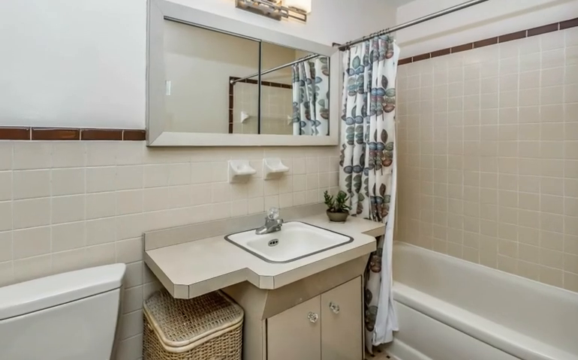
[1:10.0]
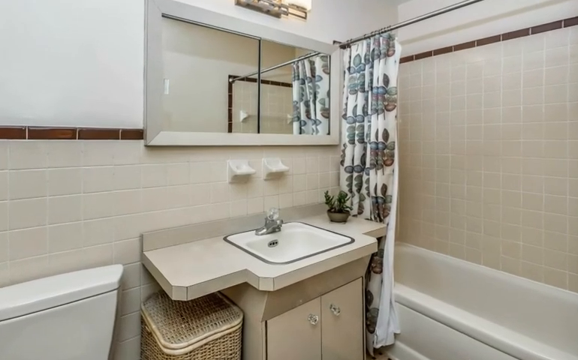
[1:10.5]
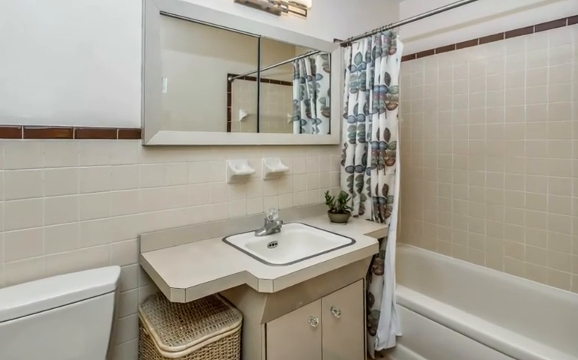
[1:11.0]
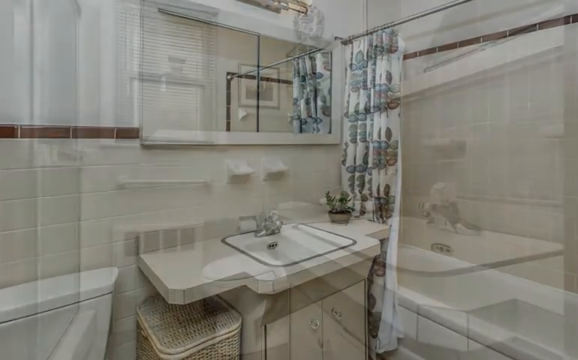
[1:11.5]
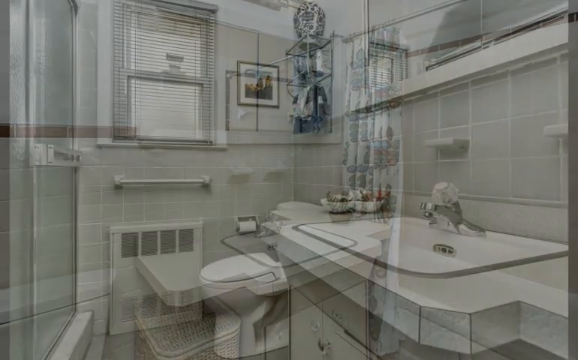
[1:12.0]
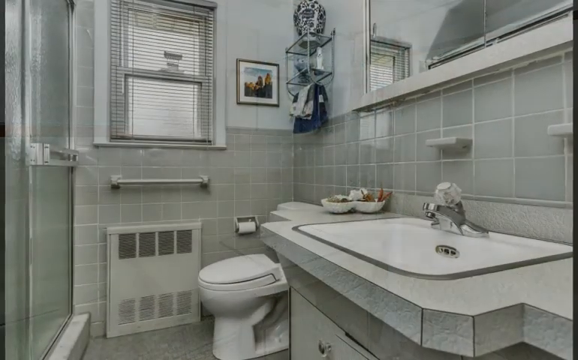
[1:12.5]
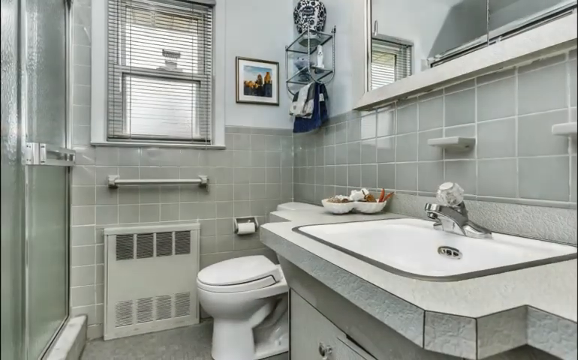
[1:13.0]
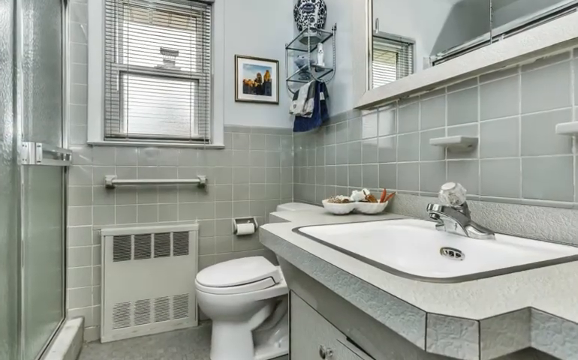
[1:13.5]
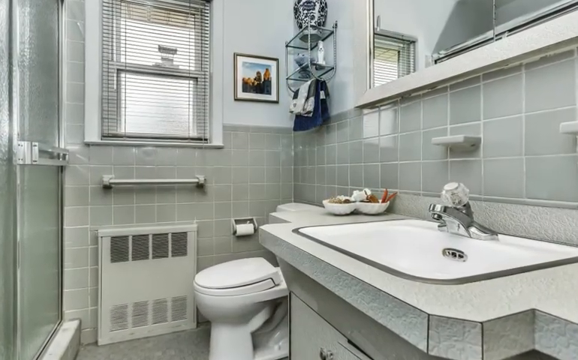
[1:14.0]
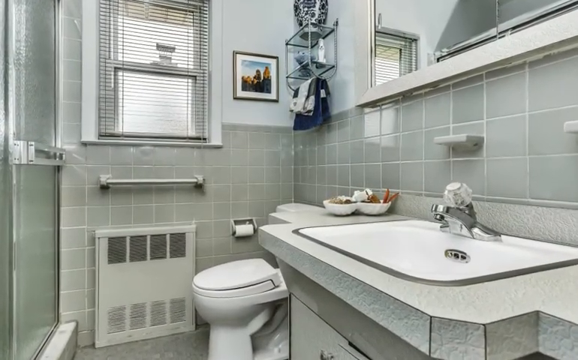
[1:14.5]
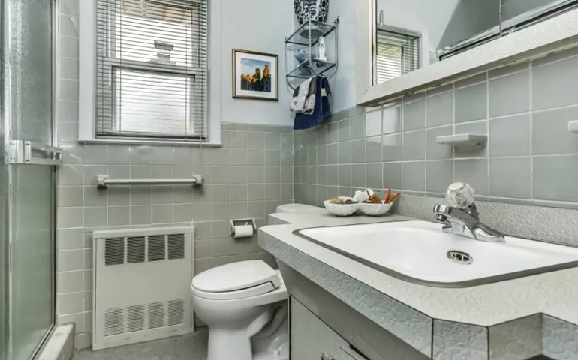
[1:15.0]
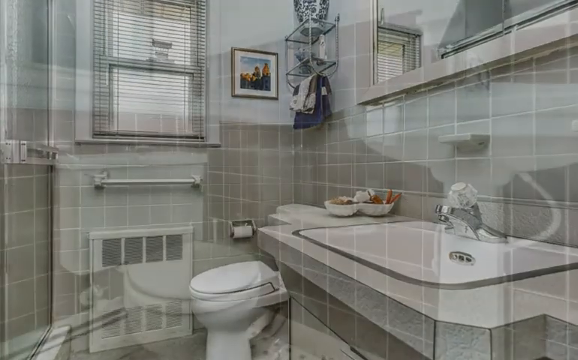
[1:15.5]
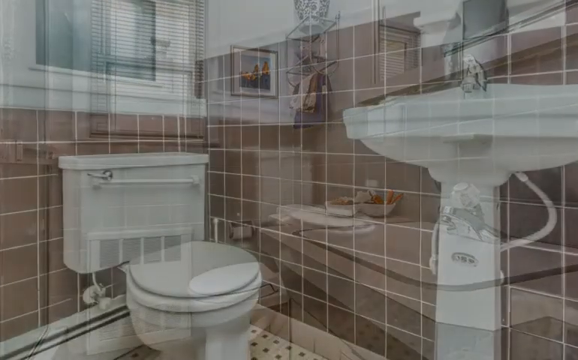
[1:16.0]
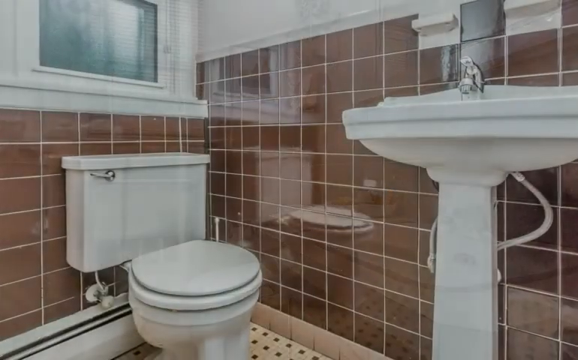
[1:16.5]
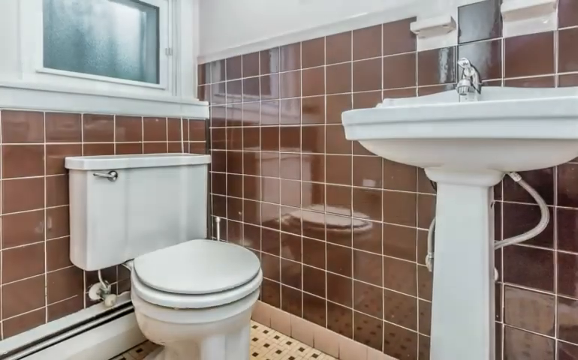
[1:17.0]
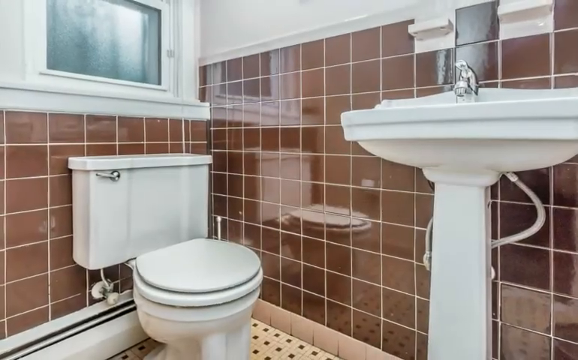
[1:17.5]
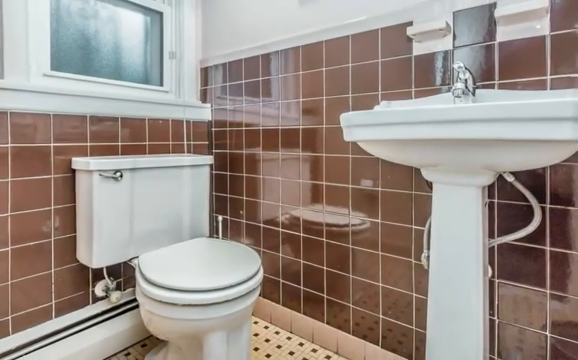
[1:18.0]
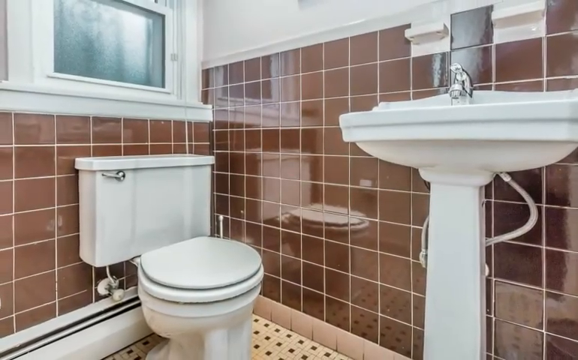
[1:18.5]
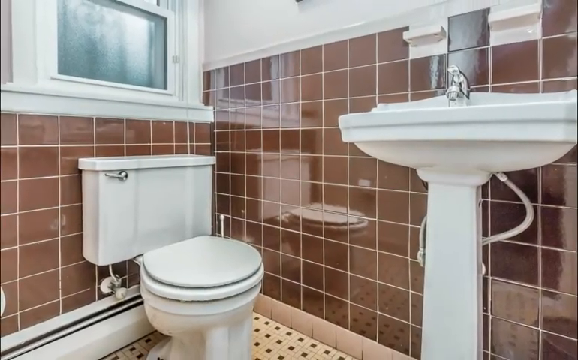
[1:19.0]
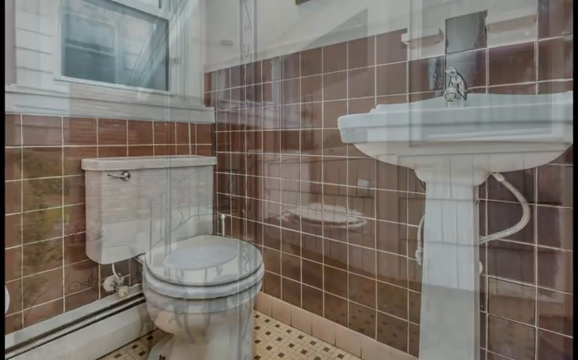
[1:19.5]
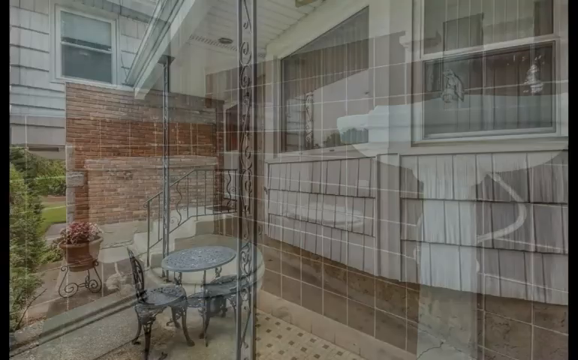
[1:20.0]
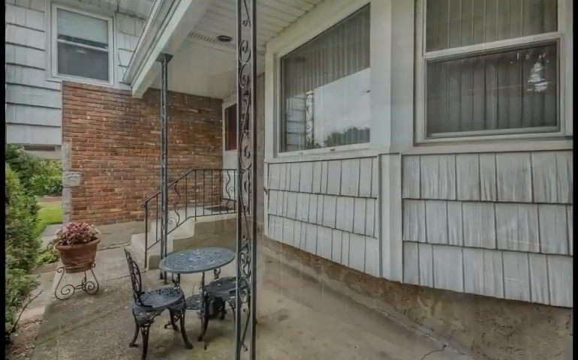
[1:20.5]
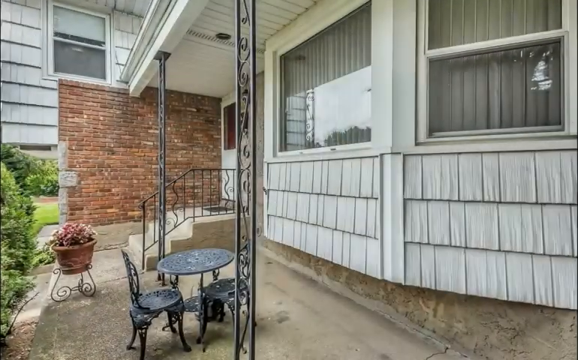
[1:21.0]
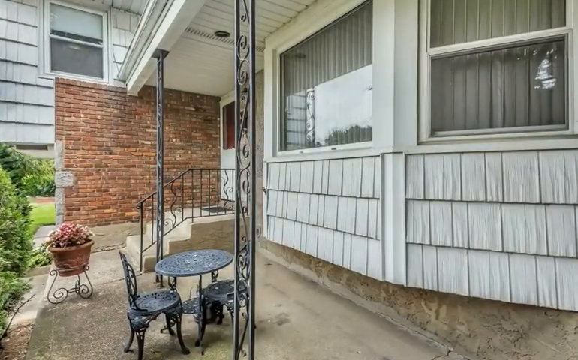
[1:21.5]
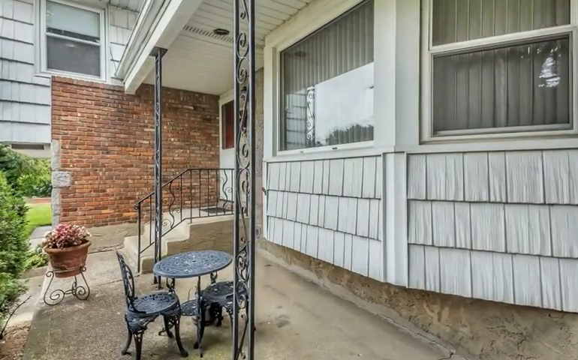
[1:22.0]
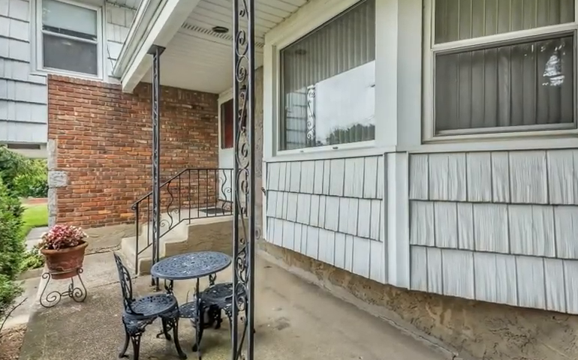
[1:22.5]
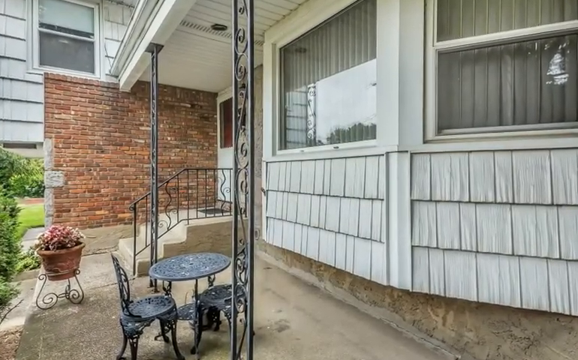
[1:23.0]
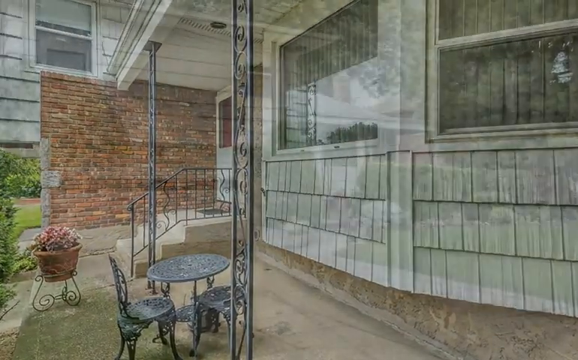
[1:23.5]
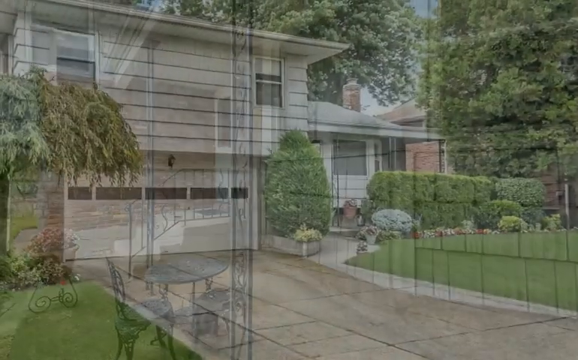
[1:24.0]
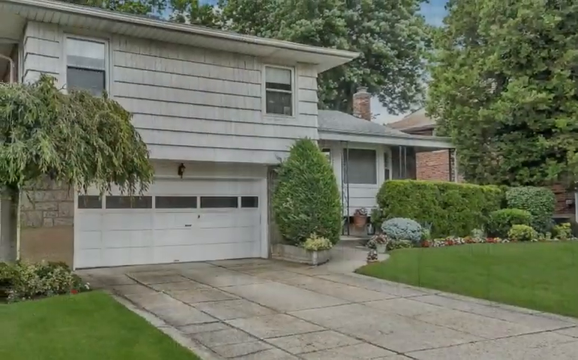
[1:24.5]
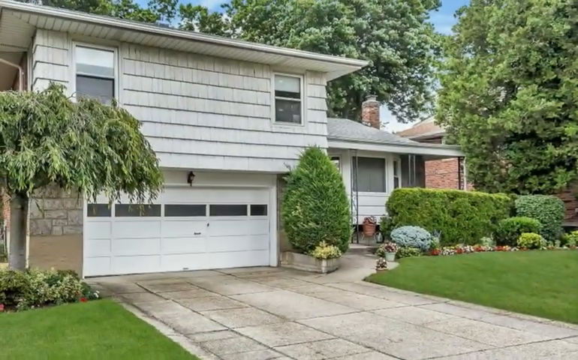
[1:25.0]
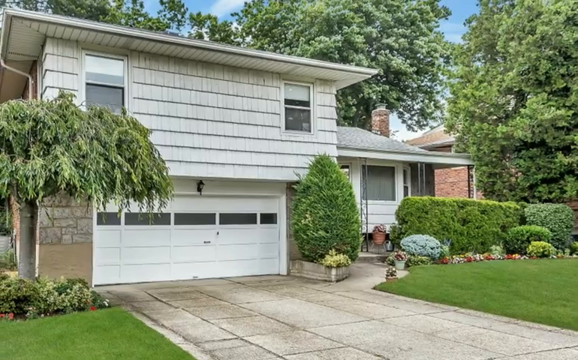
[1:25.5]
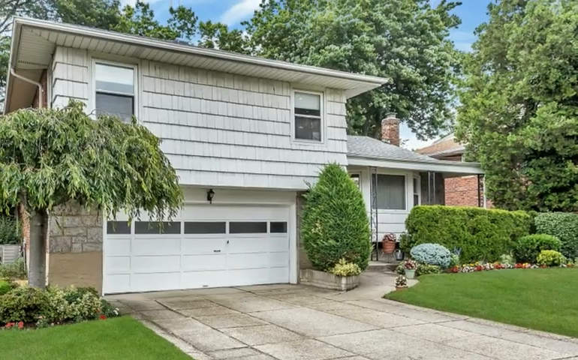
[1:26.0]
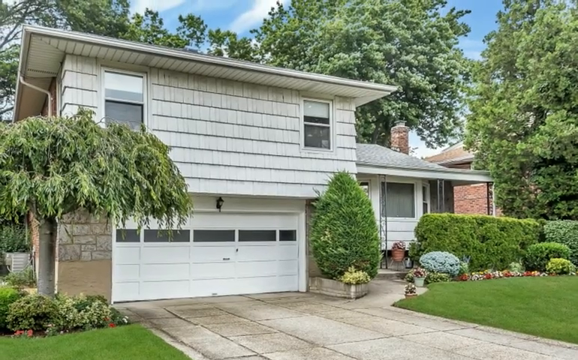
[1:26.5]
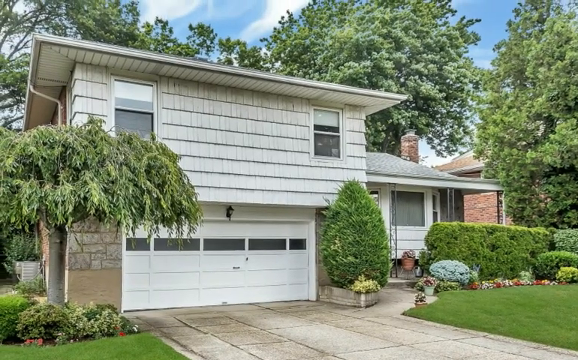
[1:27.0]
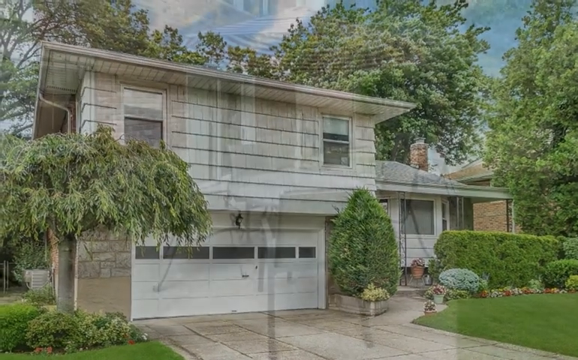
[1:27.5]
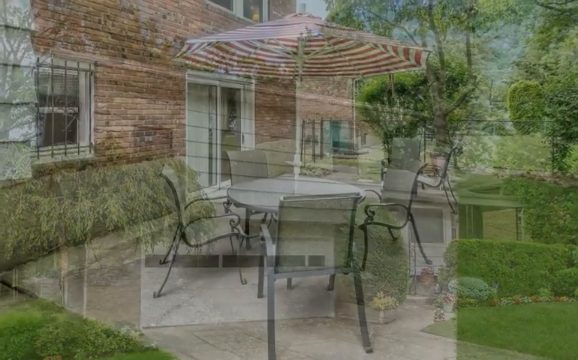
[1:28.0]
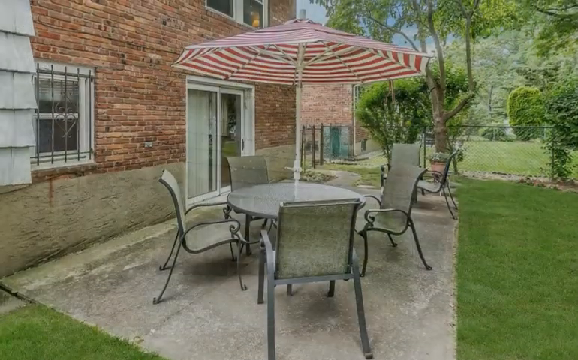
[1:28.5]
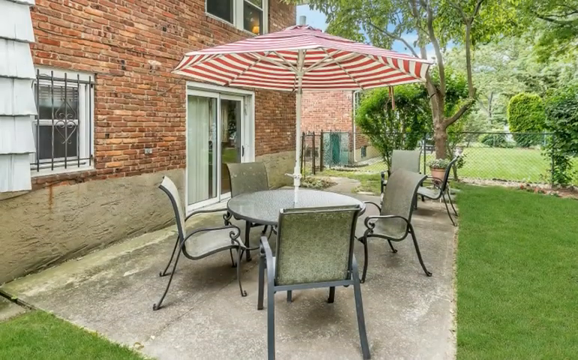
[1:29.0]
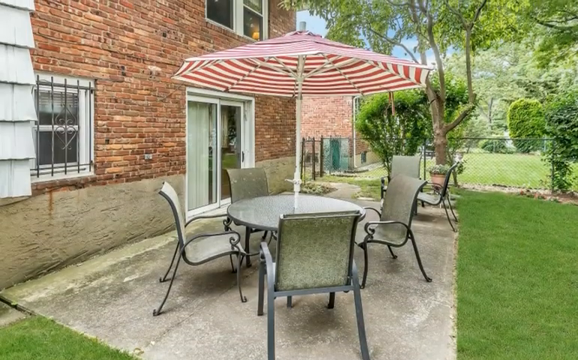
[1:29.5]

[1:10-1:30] The next area appears to be a guest bathroom, painted white with misty gray tiles. There looks to be some sort of built-in heater next to the white toilet, and a tissue holder is built into the wall next to the toilet. A towel rack is on the wall above the heater. A small rectangular window is covered by a gray mini blind. The sink is a basin-style sink with a small gray surrounding area and a small gray cabinet under it. The sink hardware is metallic silver with a clear ball on it that resembles a large crystal ball. Two decorative bowls are on the sides of the sink and look like they hold potpourri or some other decorative item.